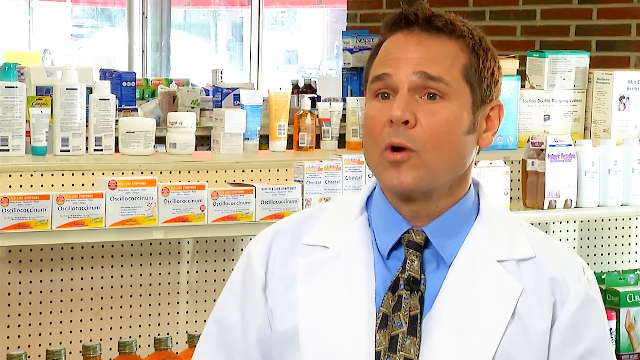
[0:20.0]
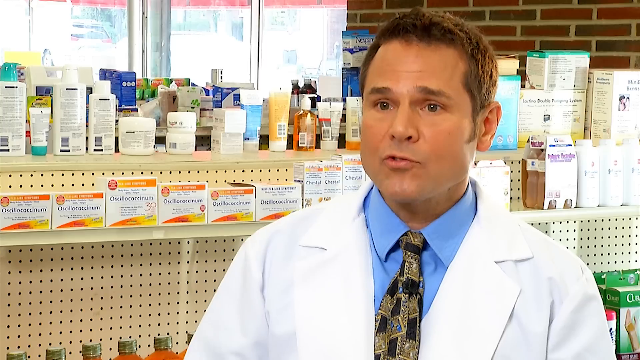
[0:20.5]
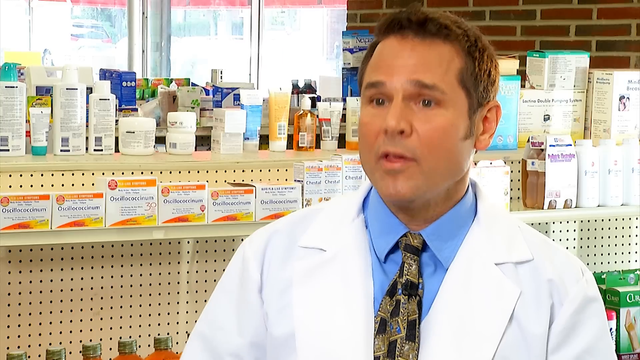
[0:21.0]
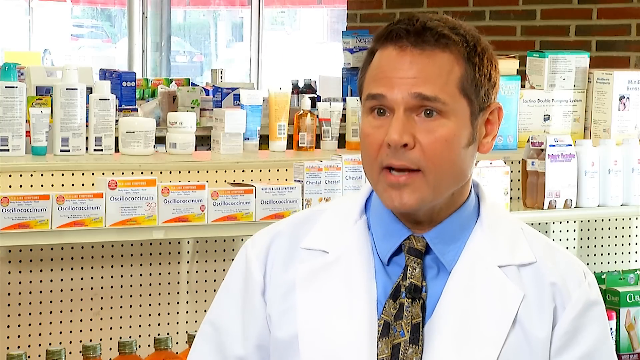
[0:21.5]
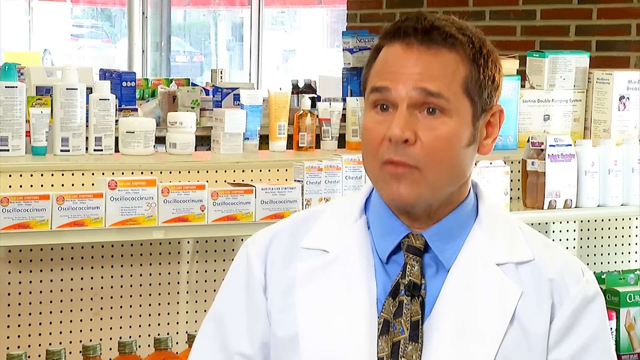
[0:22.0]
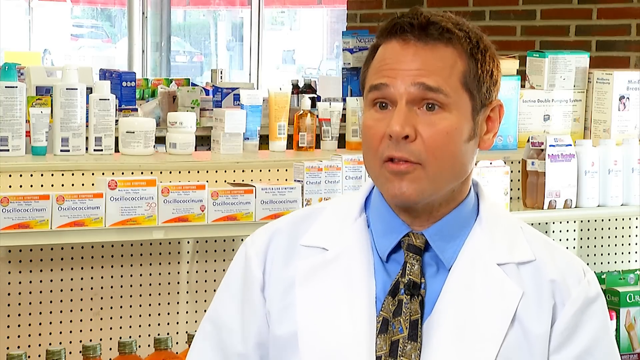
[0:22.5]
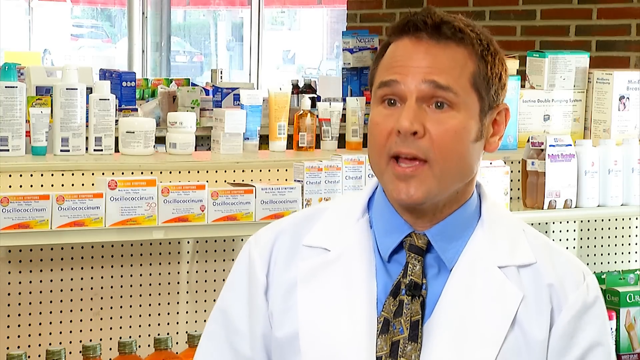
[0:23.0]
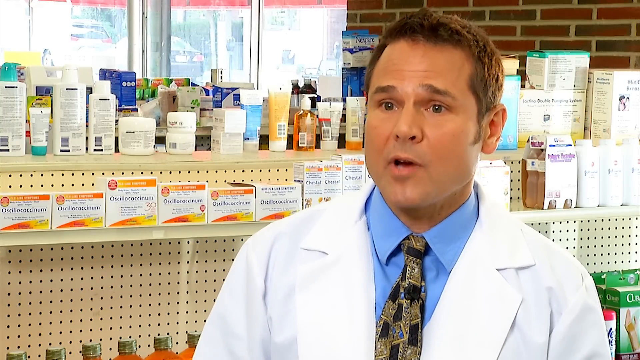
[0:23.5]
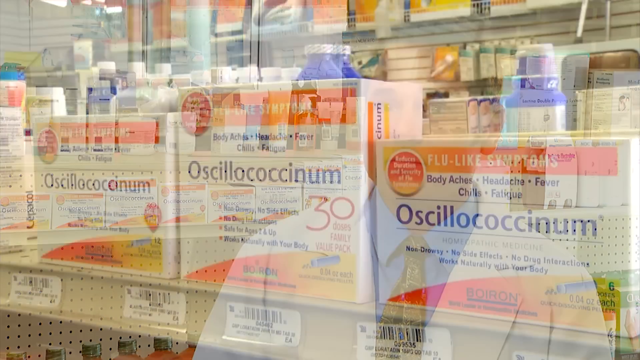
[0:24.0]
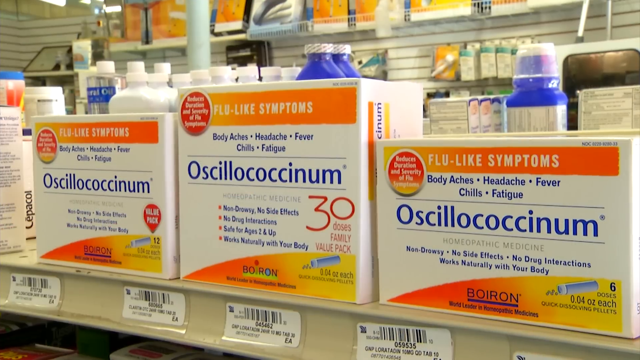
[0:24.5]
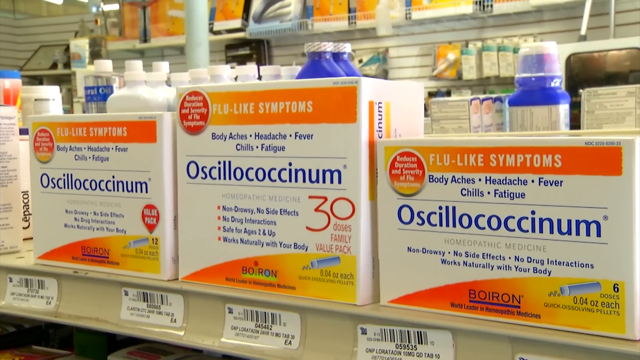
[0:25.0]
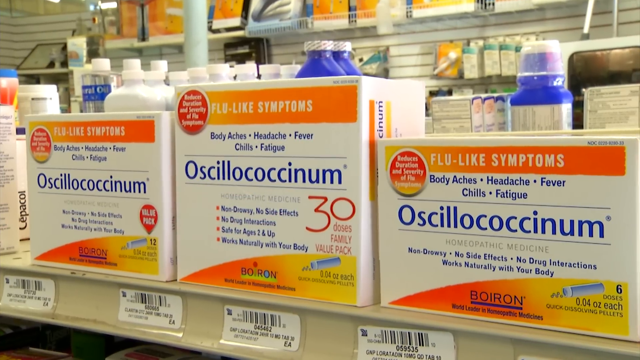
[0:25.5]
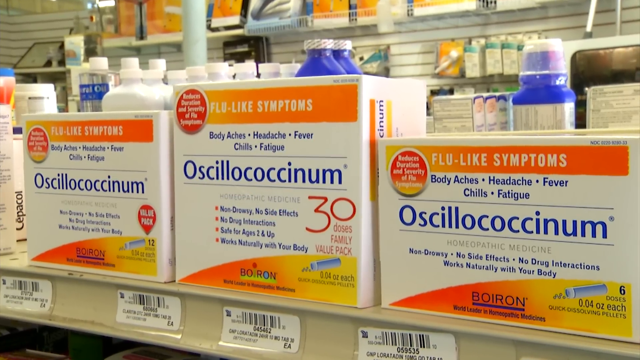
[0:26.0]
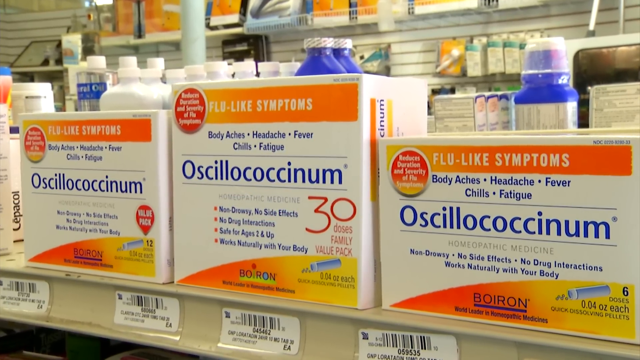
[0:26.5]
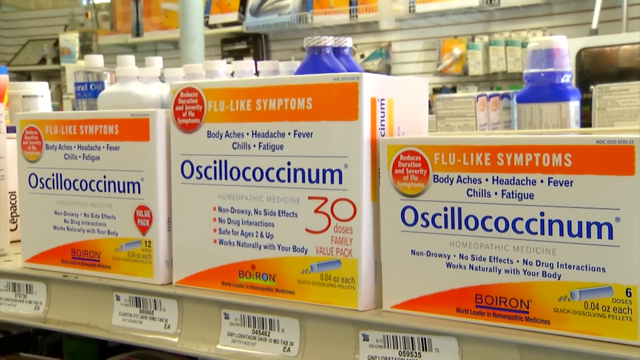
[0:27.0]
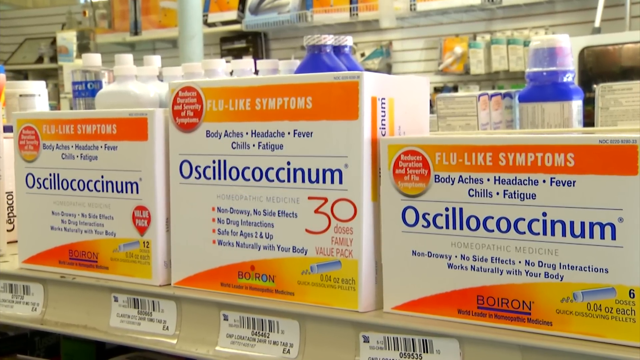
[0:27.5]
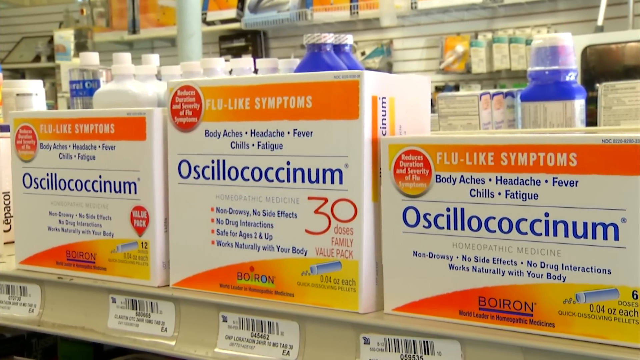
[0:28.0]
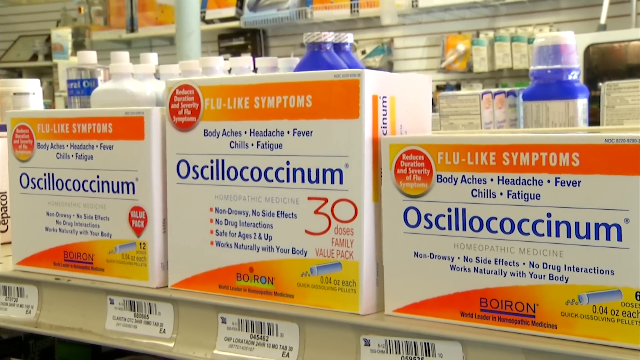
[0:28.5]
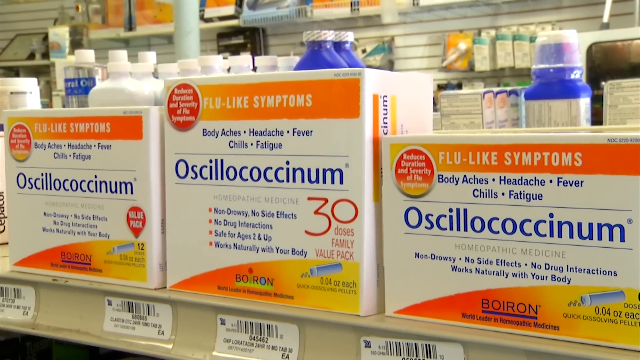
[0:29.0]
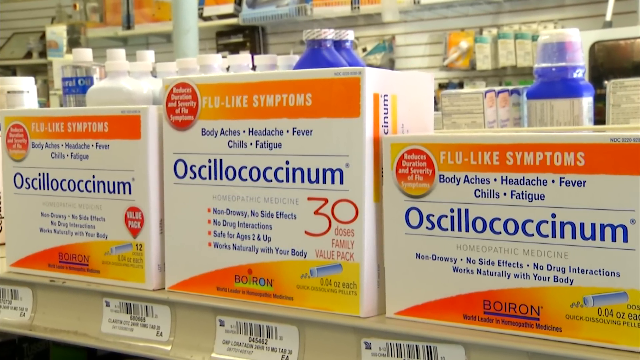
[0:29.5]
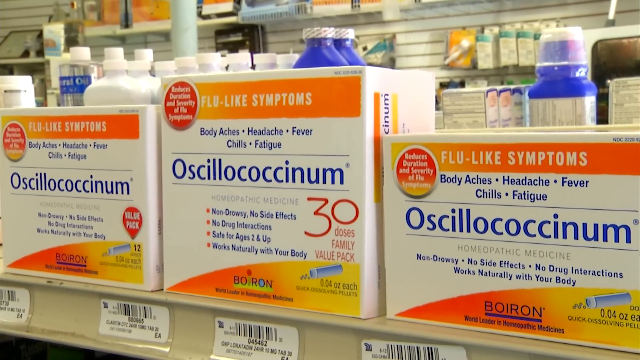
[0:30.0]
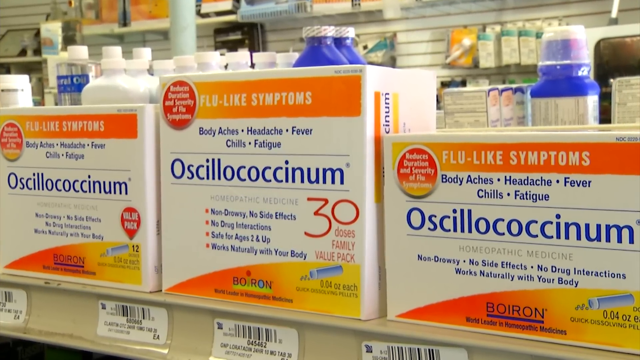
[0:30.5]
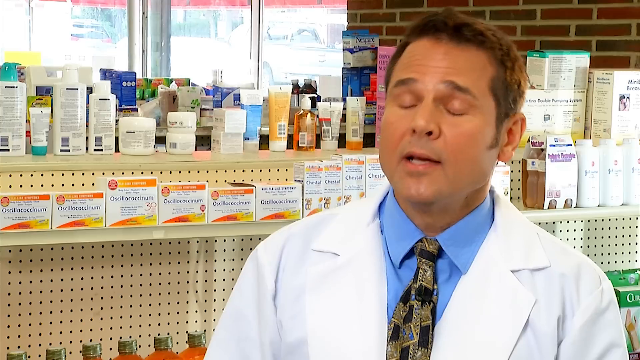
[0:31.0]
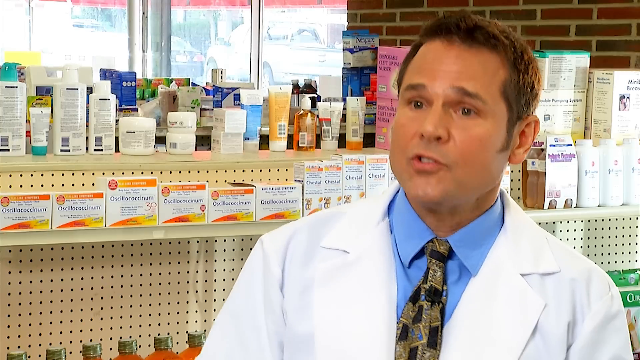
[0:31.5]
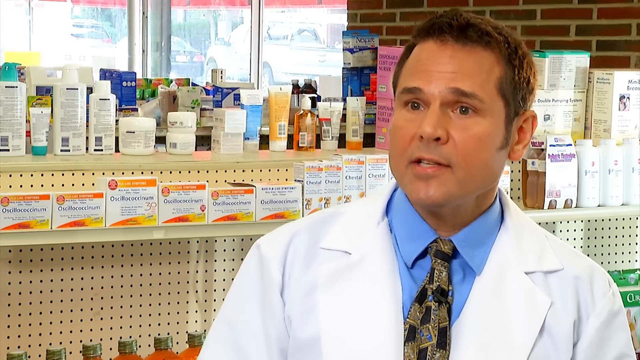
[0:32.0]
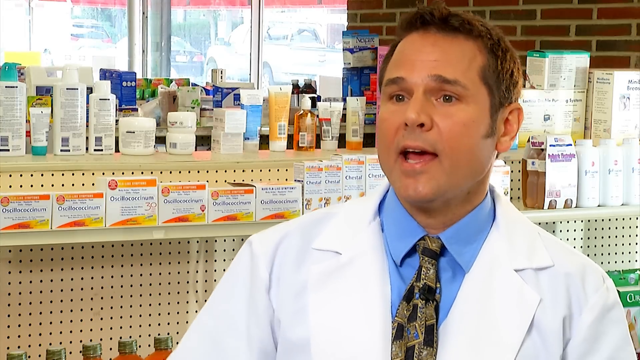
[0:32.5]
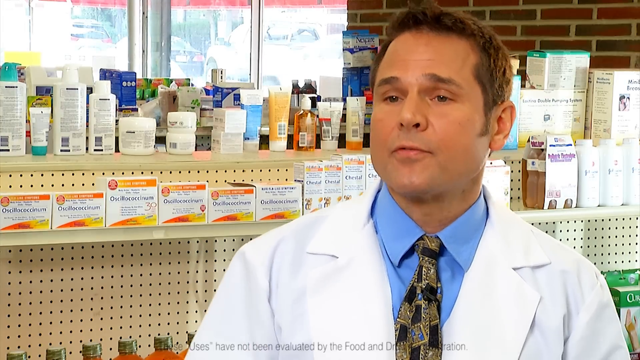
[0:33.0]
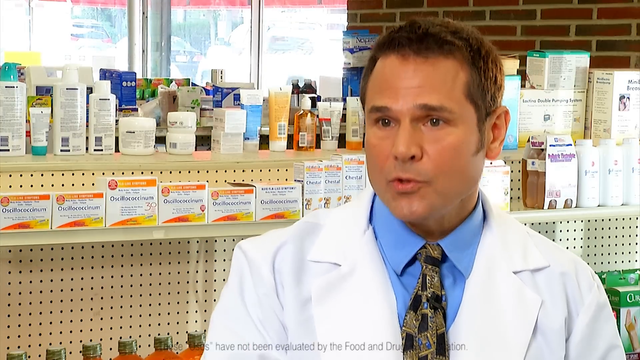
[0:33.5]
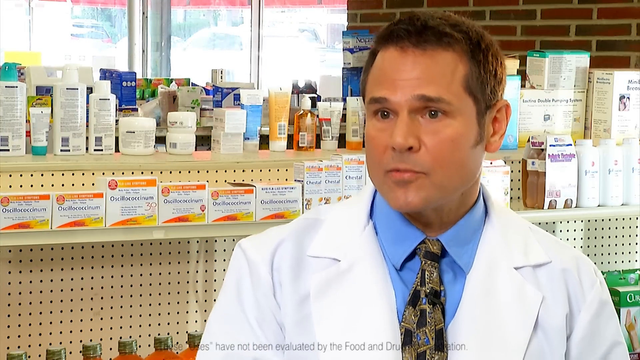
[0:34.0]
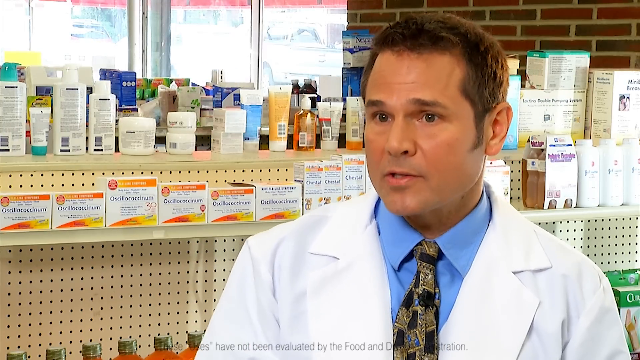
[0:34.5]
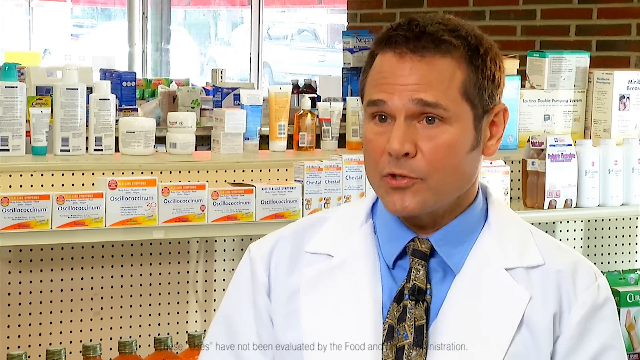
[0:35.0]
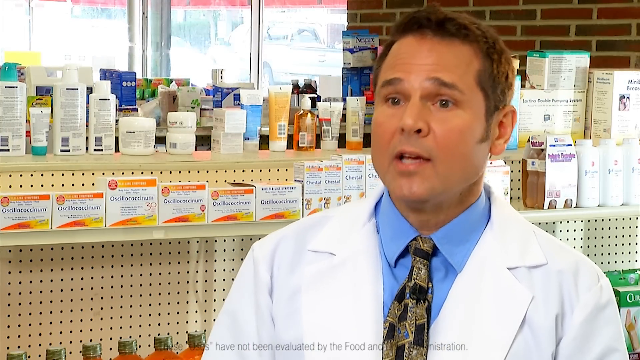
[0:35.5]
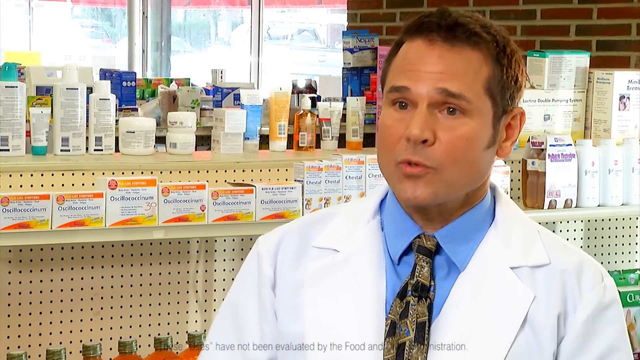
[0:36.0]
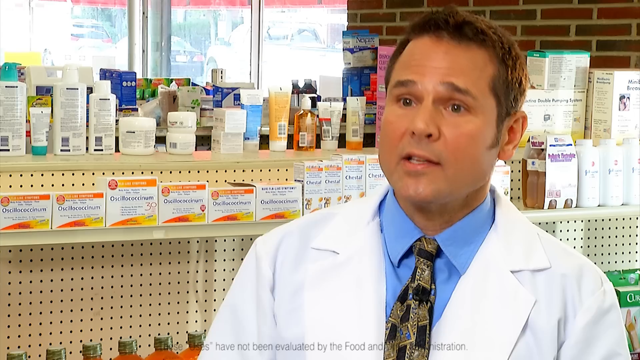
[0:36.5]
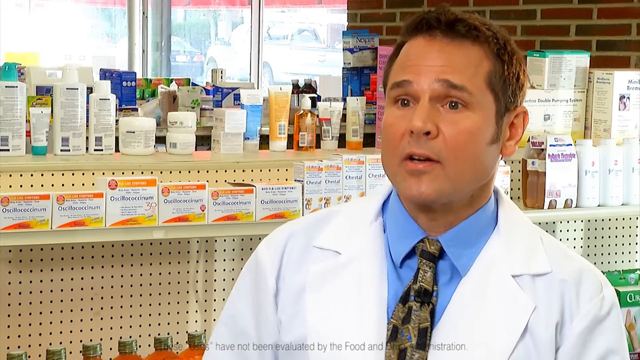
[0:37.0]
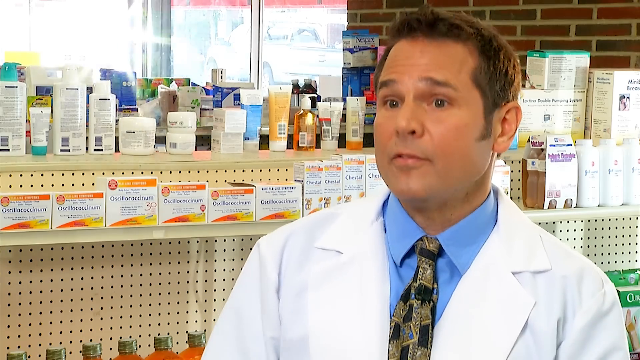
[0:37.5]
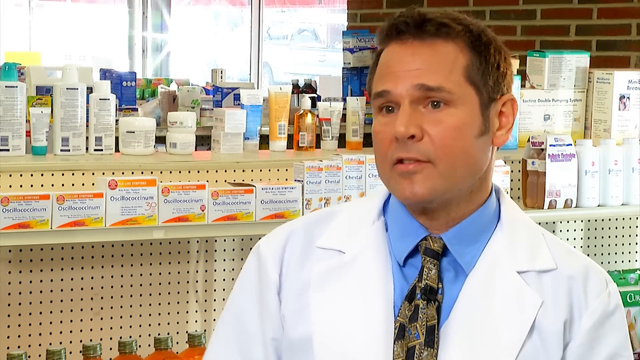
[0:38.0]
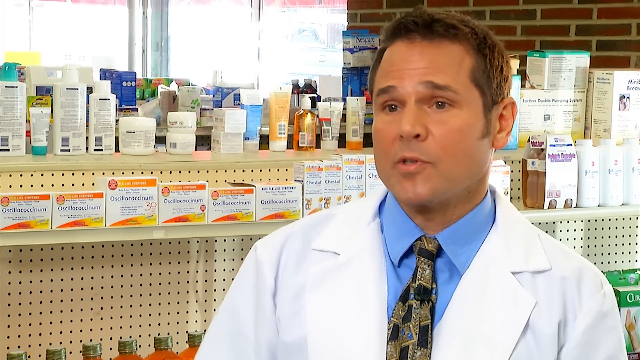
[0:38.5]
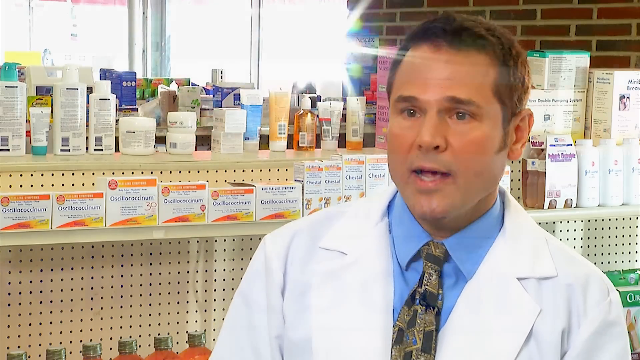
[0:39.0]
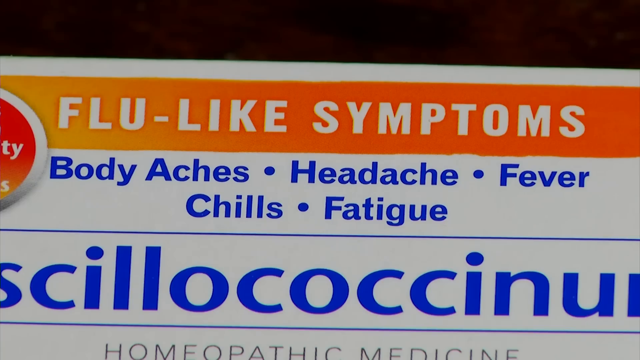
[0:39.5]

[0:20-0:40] A man in a lab coat, with a blue shirt and a tie with a grey and black pattern, stands in front of a shelf in what appears to be a pharmacy. Behind him is a row of white medication packets with orange and yellow markings. He talks into the camera, passionately nodding his head as he speaks. The image changes to a close-up of the medication packet, which has blue text on a white background; the name of the medication is Oscillococcinum. The label states it is for flu-like symptoms, including body aches, headache, fever, chills and fatigue. The image zooms in on the packet and then moves back to the man in the white lab coat, who continues to speak passionately to the camera. Then there is another close-up of the medication, and the words "flu-like symptoms" in white text on an orange background are zoomed in on.